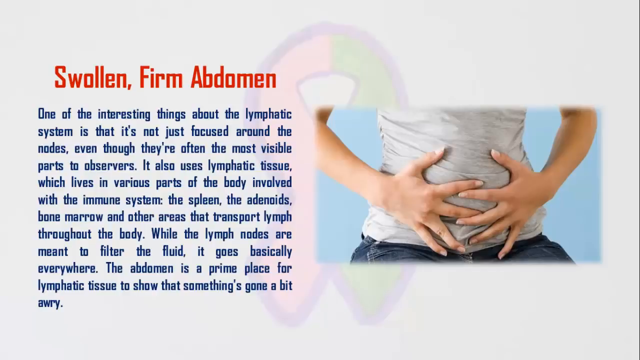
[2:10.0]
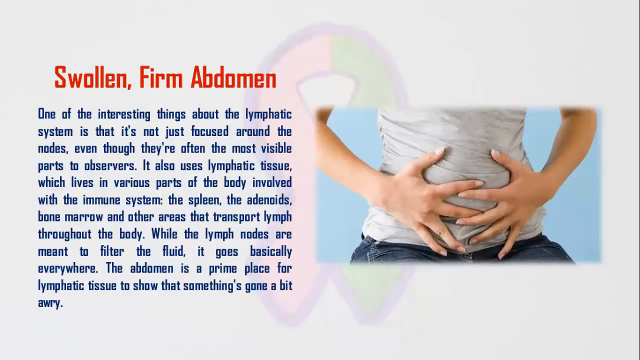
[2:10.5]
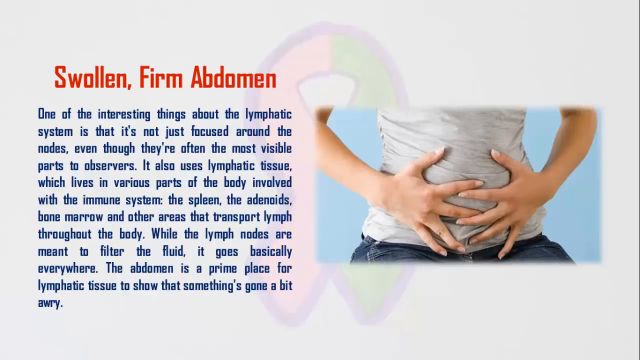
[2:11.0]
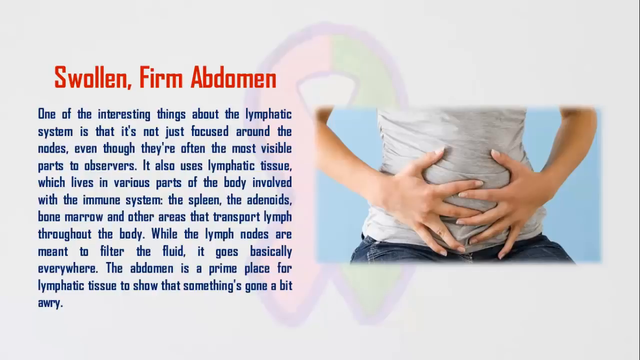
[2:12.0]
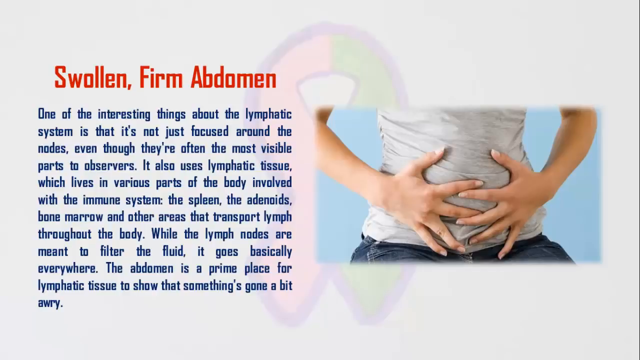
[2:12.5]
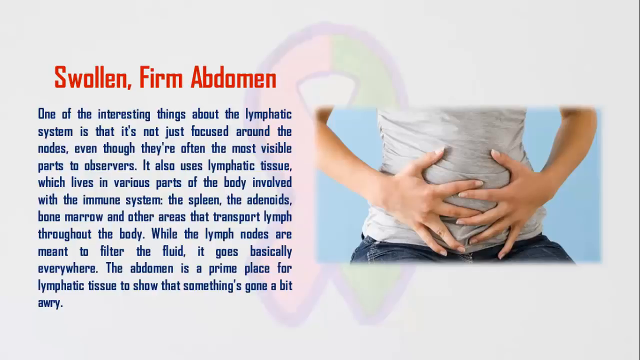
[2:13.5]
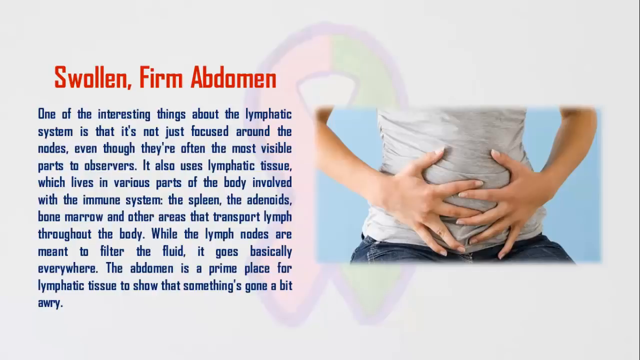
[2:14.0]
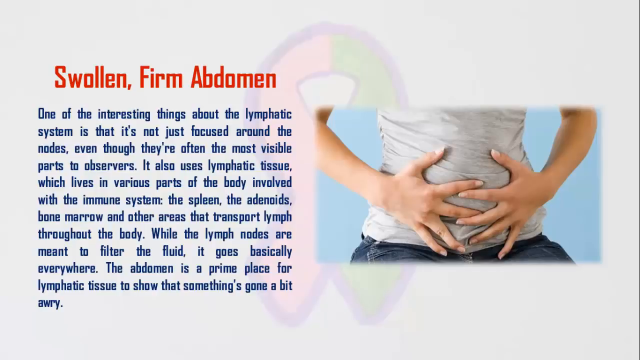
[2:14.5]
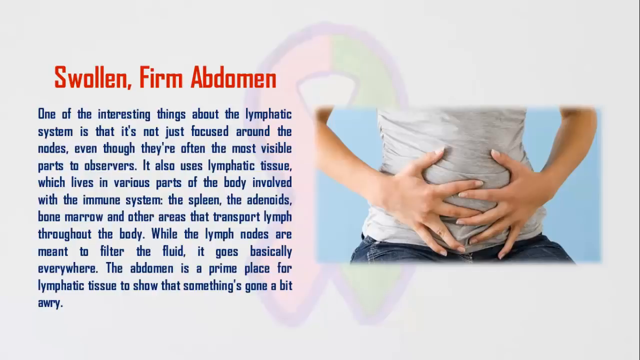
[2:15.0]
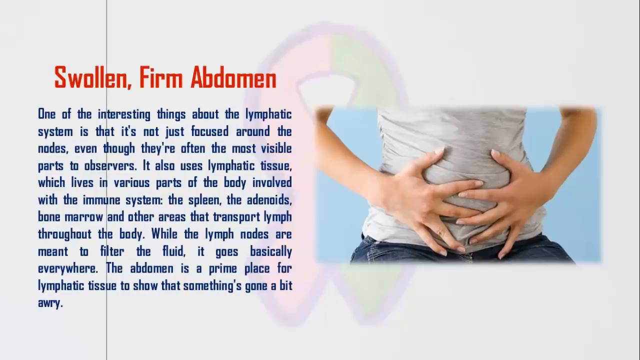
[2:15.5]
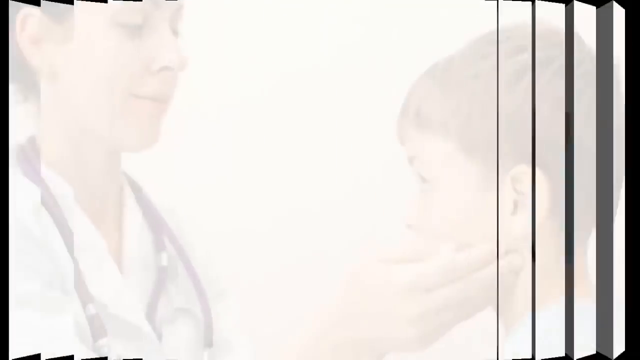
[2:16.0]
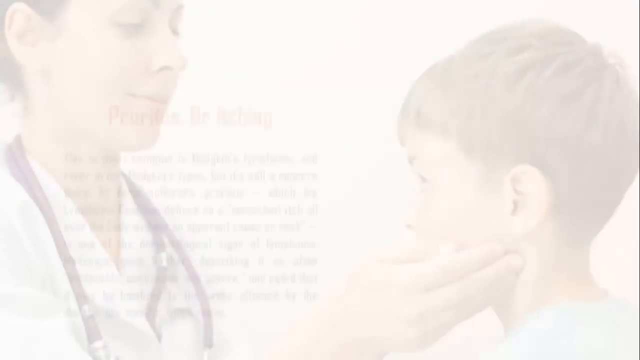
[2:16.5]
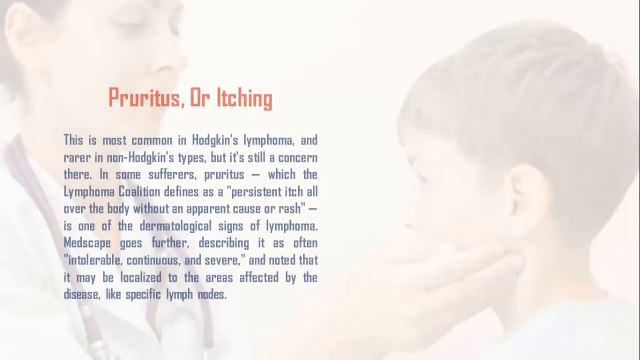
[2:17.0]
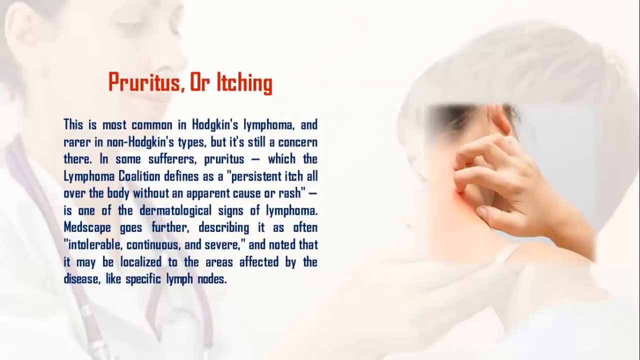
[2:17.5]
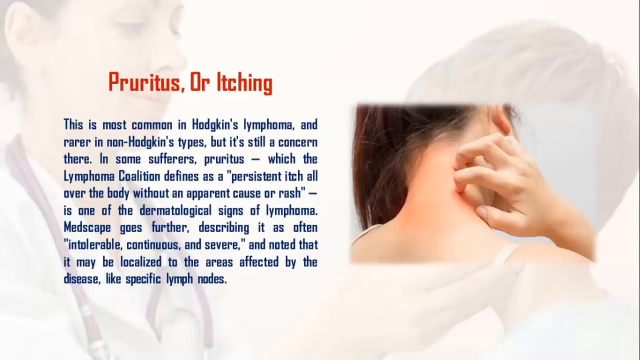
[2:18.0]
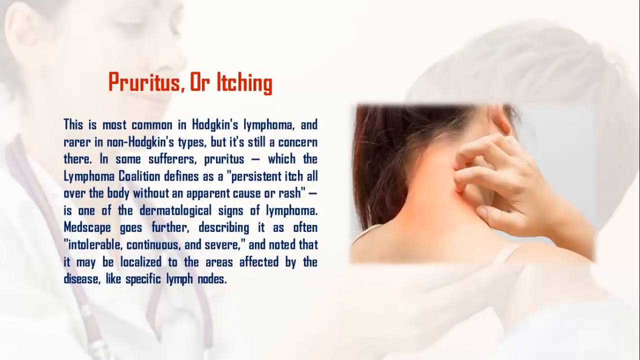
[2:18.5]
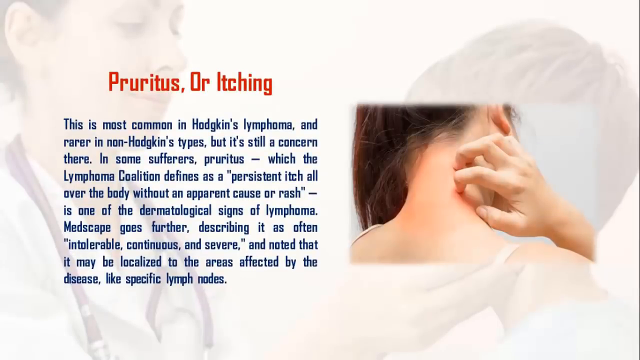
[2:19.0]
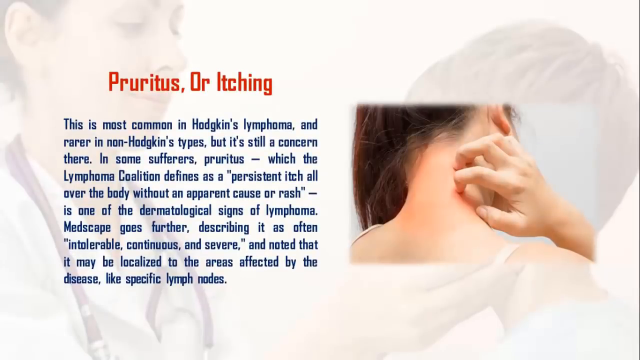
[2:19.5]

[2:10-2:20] The lady with the swollen abdomen slowly goes away. In the background, still white with the black gradient at the bottom, is a lady doctor with short brown hair in a white lab coat, and on the right side in the background a child, looking like a little boy with short brown hair; she seems to be checking him out. A picture in the middle on the right shows the back of a woman's head, neck and shoulders. Her right hand is up on her neck scratching, the neck is a little red, and her long dark hair is pushed over to the left side while she scratches on the right. To the left of the picture, large red letters read "pruitis or itching." Below, blue letters read: "This is the most common in Hodgkin's lymphoma and rarer in non-Hodgkin's types, but it's still a concern there. In some sufferers, pruitis, which the lymphoma coalition defines as a persistent itch all over the body without an apparent cause or rash, is one of the dermatological signs of lymphoma."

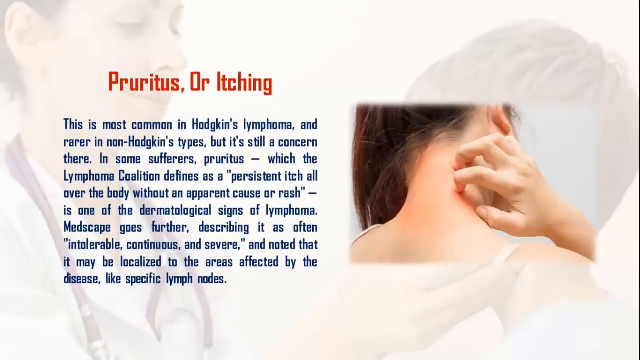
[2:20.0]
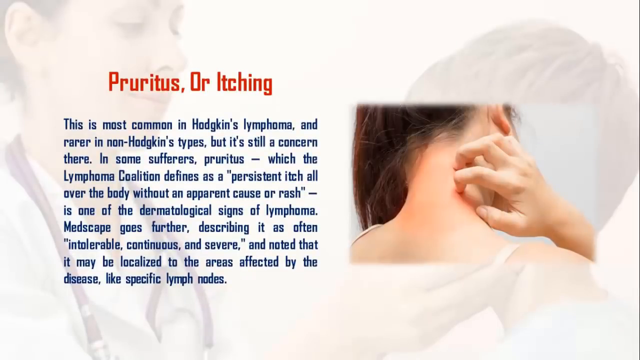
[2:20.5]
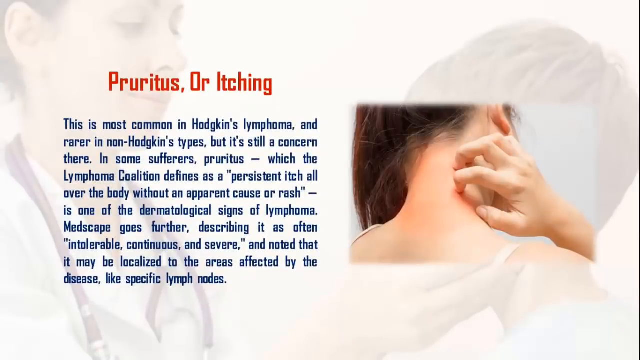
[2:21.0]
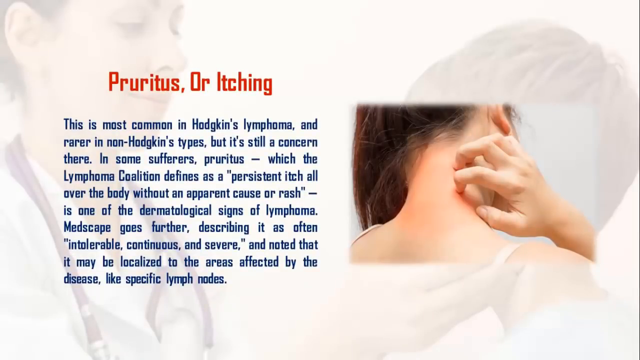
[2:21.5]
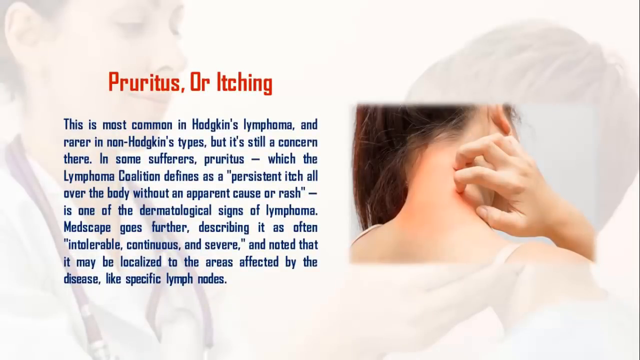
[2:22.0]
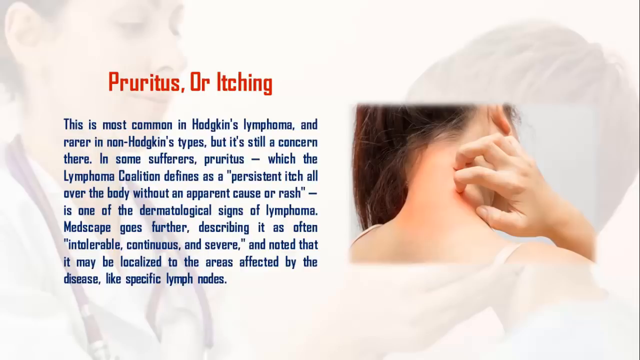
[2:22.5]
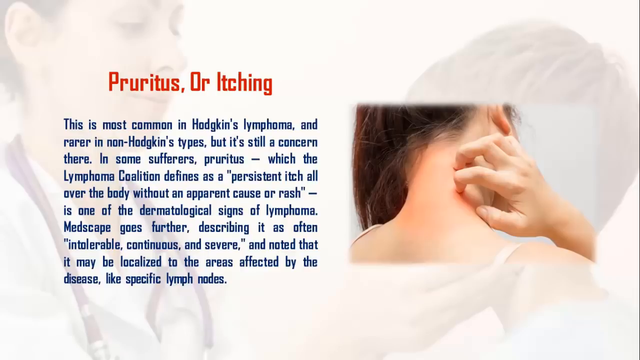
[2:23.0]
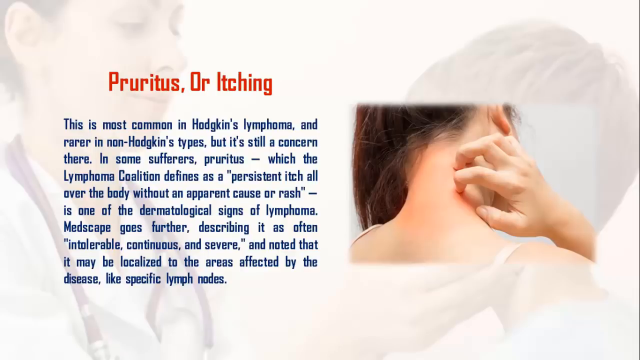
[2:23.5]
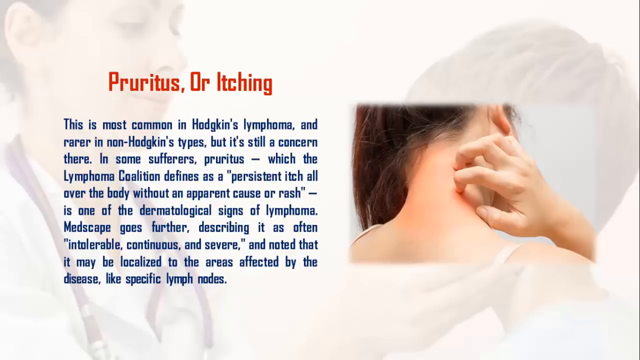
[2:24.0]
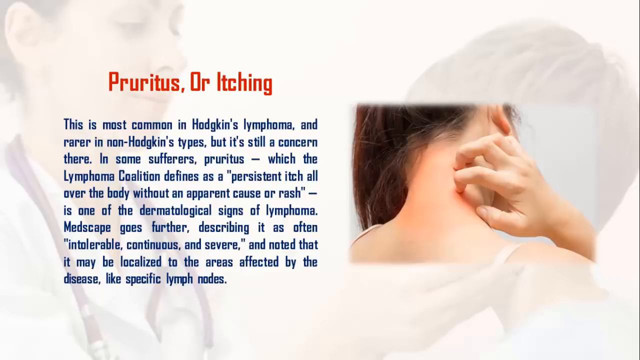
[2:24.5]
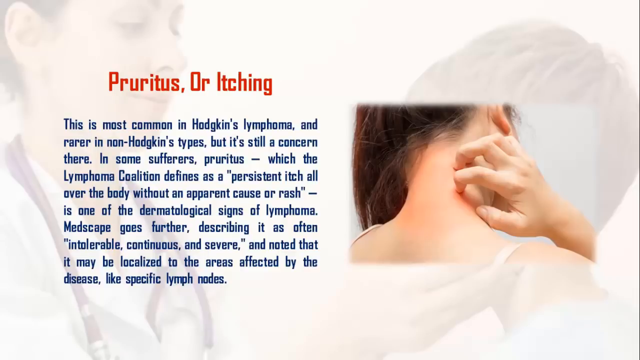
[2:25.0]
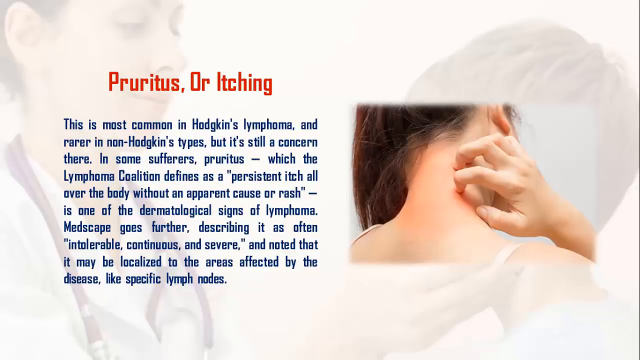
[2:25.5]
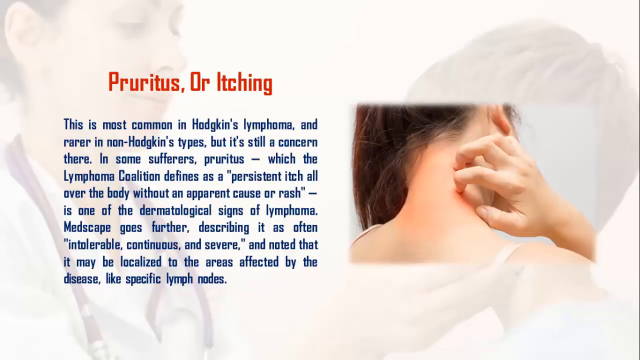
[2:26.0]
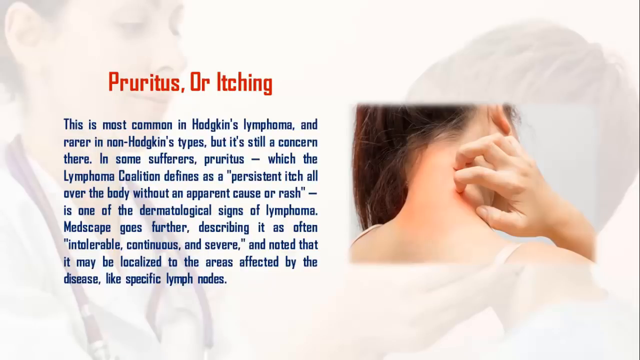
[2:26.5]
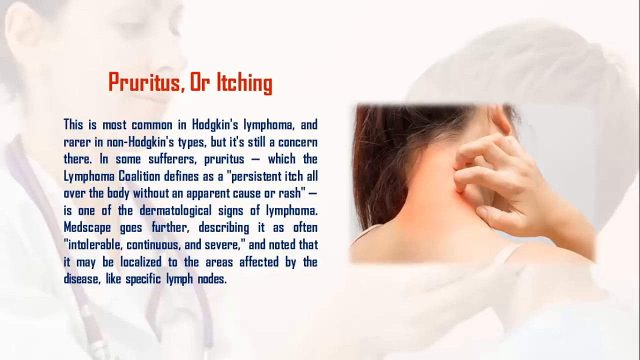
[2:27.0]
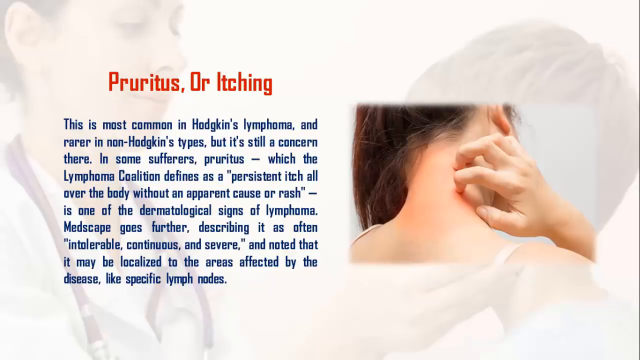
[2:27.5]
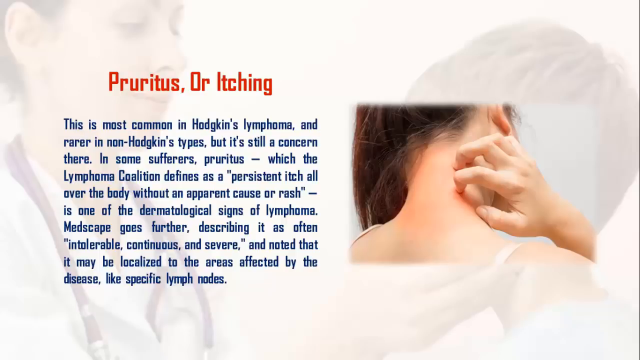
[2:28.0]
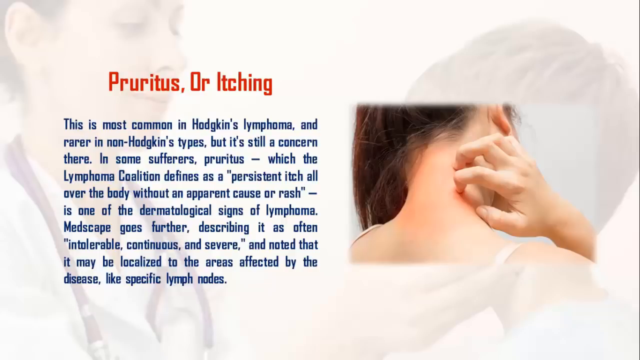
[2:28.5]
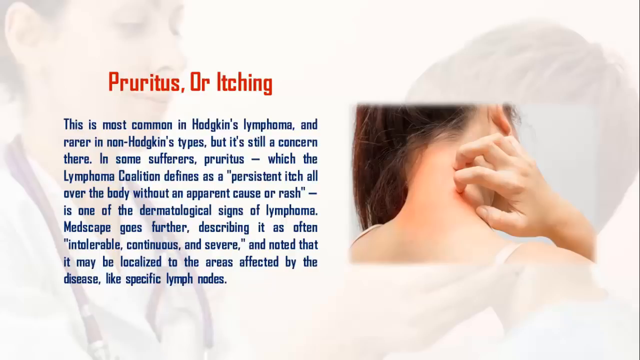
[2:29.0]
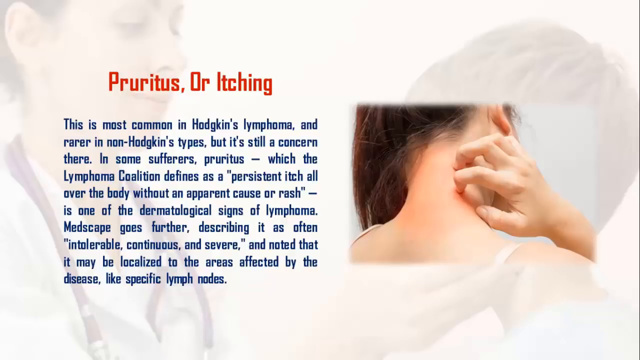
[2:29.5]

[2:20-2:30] The screen remains on the pruitis slide. The white background has a black gradient at the very bottom, and the lady doctor with short brown hair and a white lab jacket is helping a young man with short brown hair on the right side. On top of this, in the middle on the right, is the picture of the back of a woman's head, neck and shoulders; she looks like a young woman with long dark hair swept over to the left side, scratching the back of her neck with her right hand, and the neck looks kind of reddish. To the left, large red letters read "pruitis or itching," and blue writing underneath reads: "This is most common in Hodgkin's lymphoma and rarer in non-Hodgkin's types but it's still a concern there. In some sufferers pruitis which the lymphoma coalition defines as a persistent itch all over the body without an apparent cause or rash is one of the dermatological signs of lymphoma. Medscape goes farther describing it as often intolerable, continuous and severe and noted that it may be localized to the areas affected by the disease like specific lymph nodes."